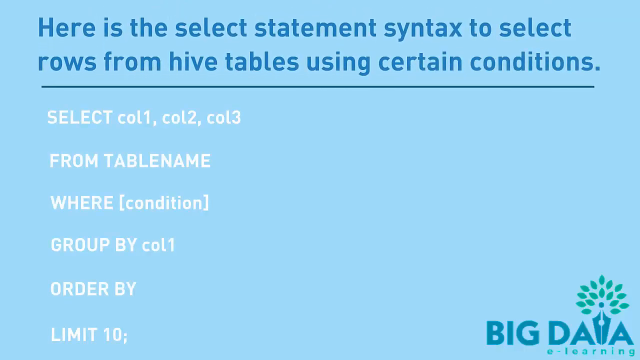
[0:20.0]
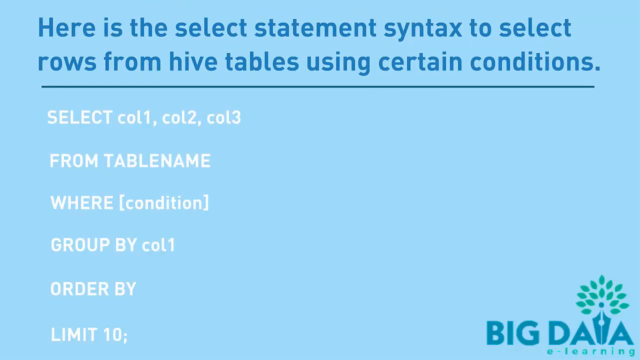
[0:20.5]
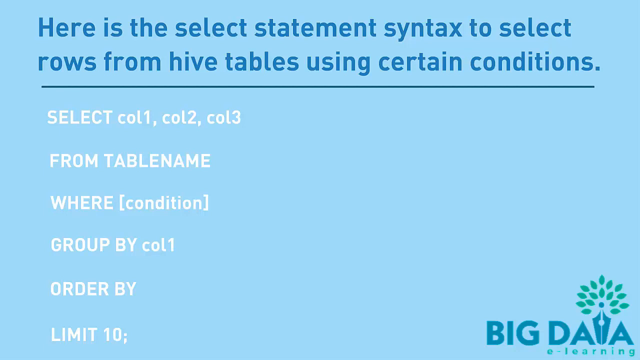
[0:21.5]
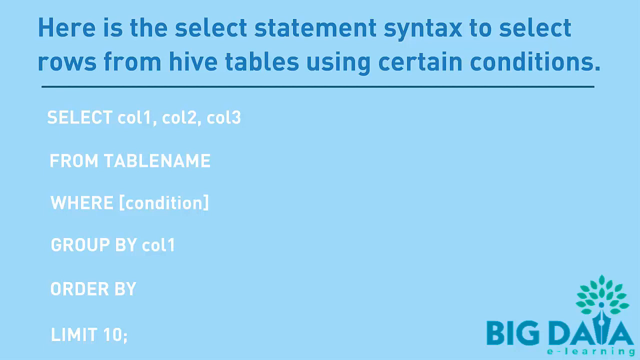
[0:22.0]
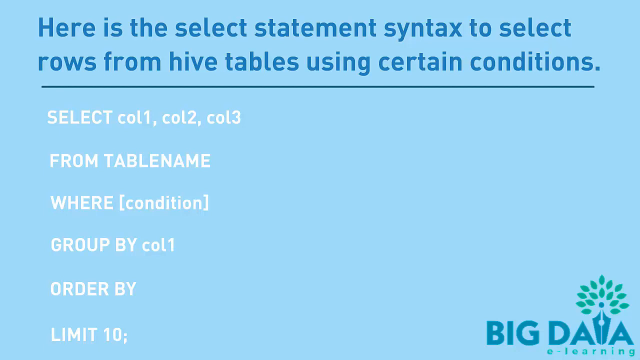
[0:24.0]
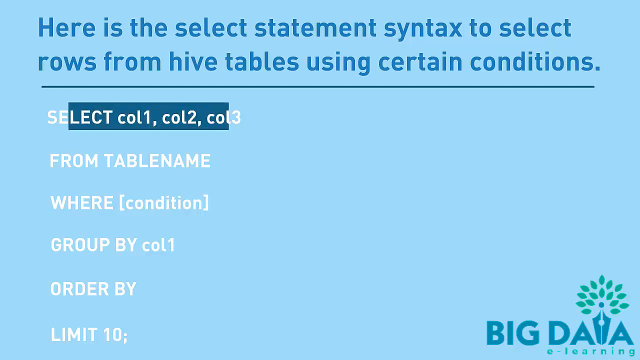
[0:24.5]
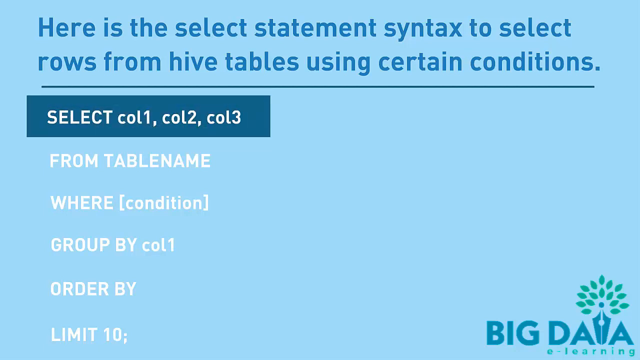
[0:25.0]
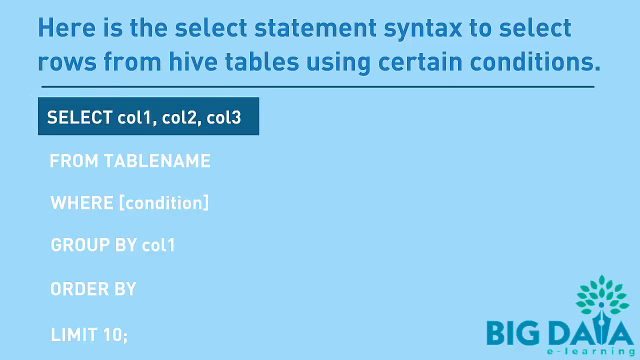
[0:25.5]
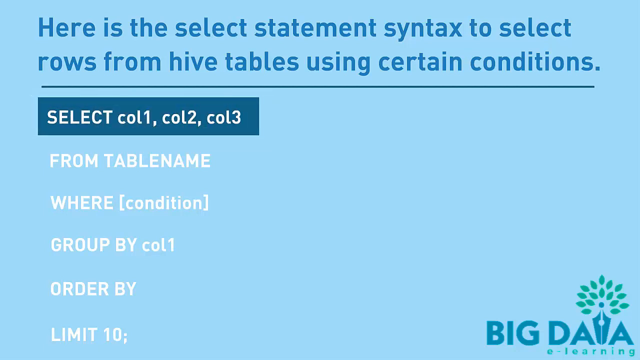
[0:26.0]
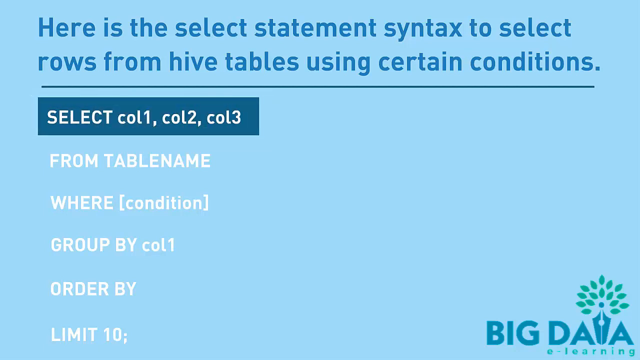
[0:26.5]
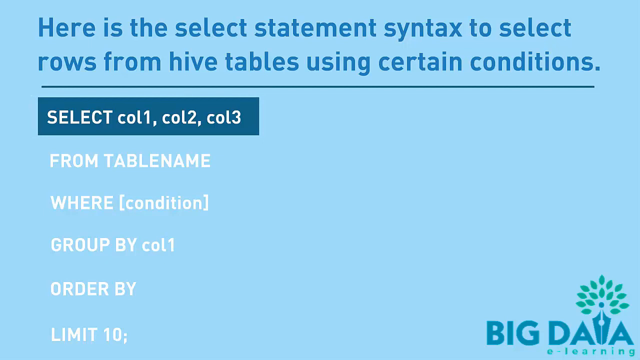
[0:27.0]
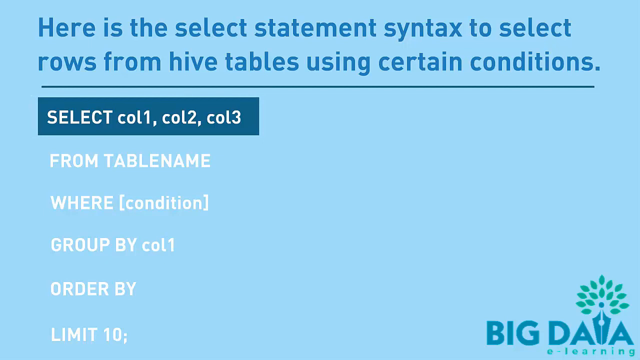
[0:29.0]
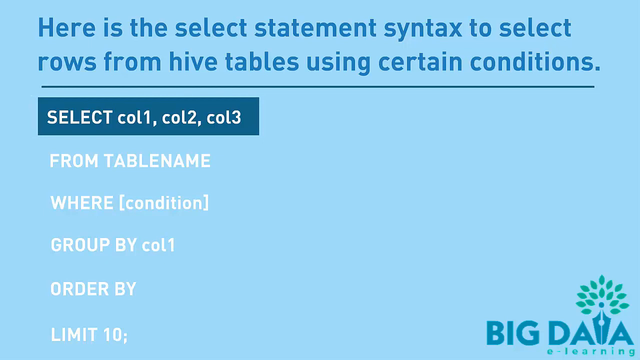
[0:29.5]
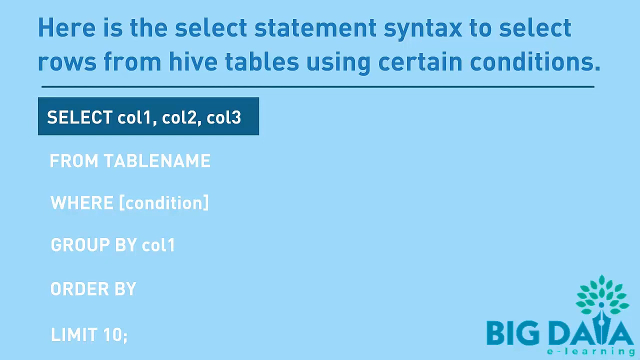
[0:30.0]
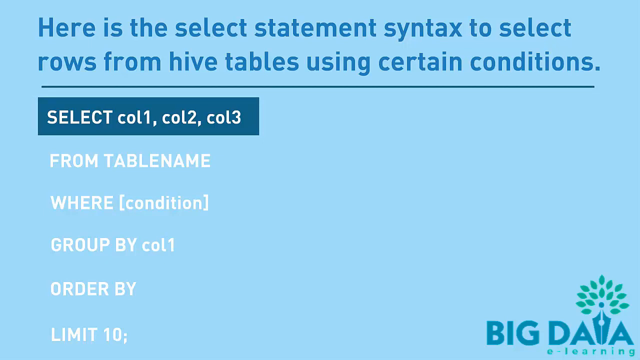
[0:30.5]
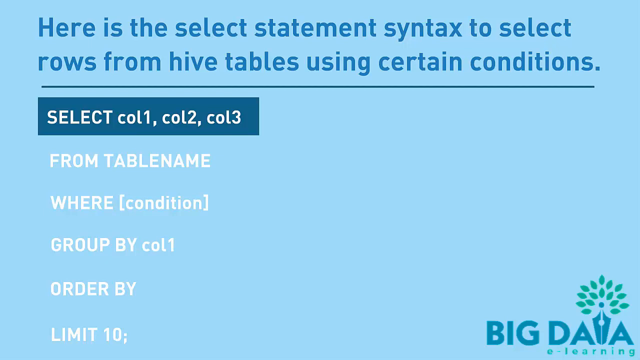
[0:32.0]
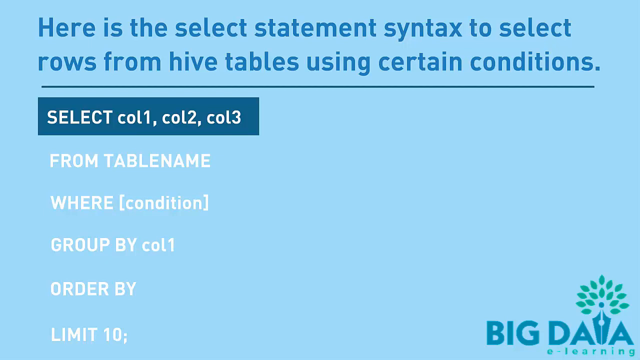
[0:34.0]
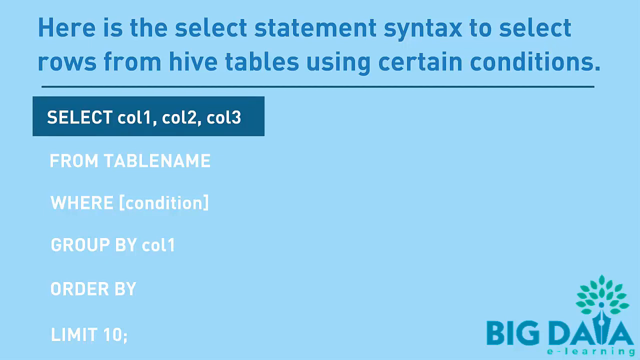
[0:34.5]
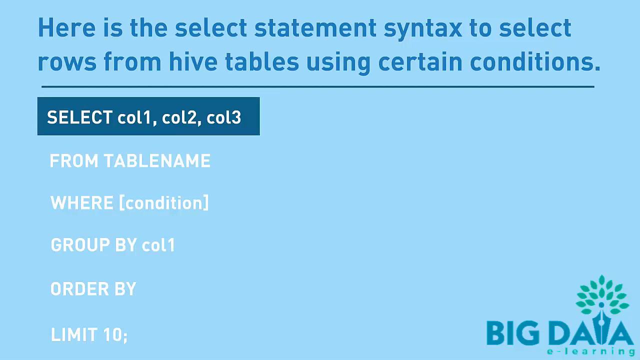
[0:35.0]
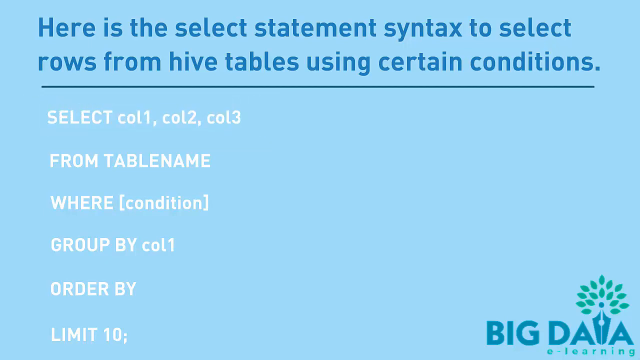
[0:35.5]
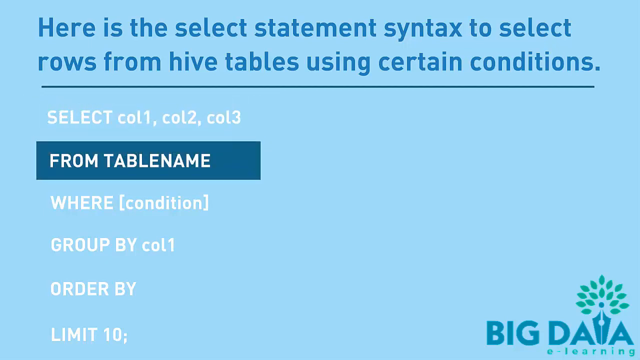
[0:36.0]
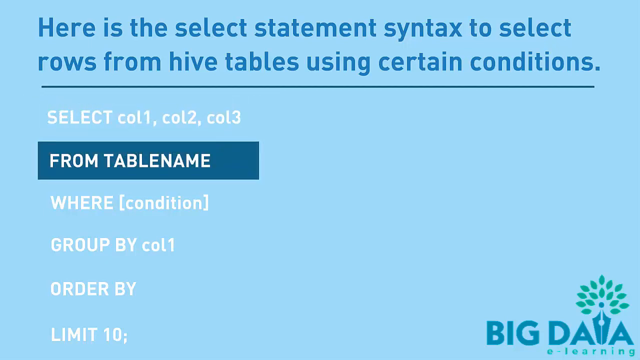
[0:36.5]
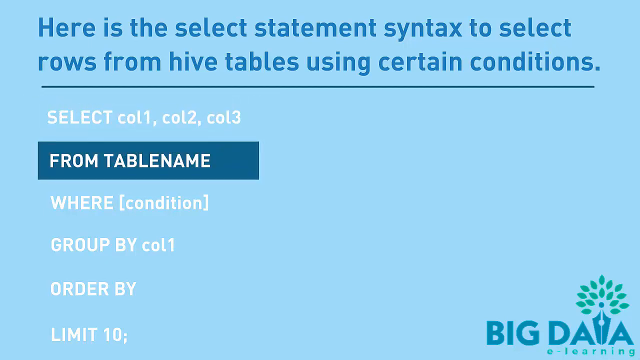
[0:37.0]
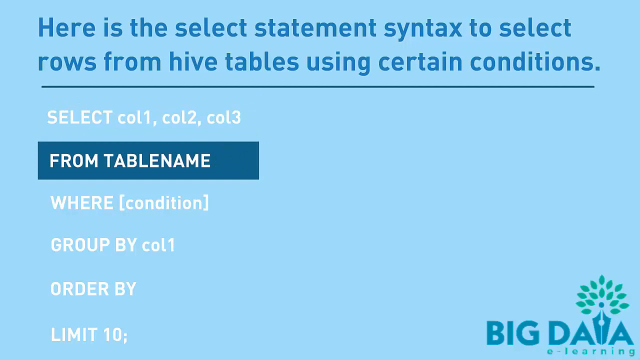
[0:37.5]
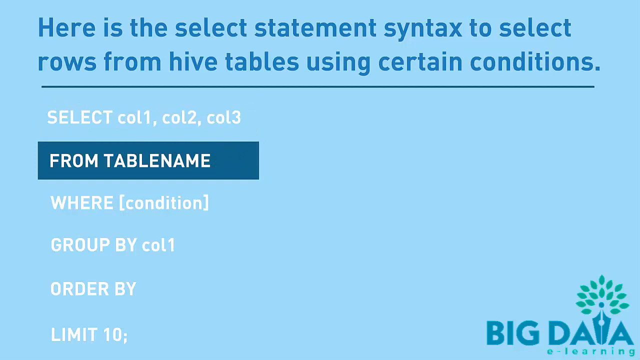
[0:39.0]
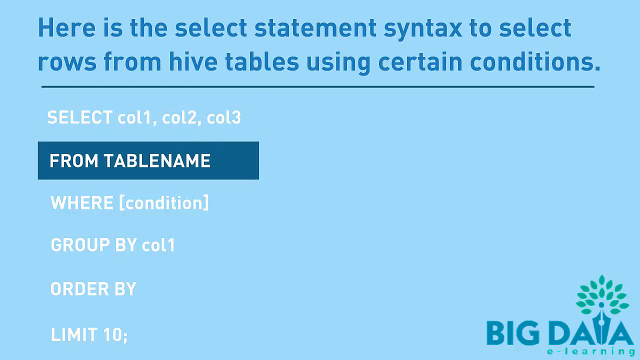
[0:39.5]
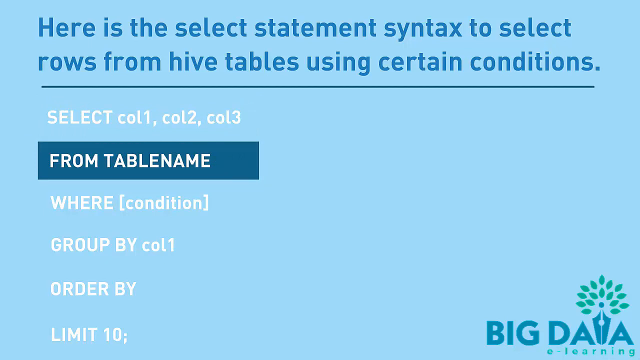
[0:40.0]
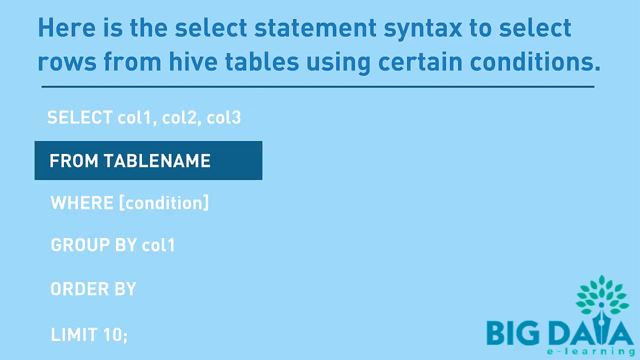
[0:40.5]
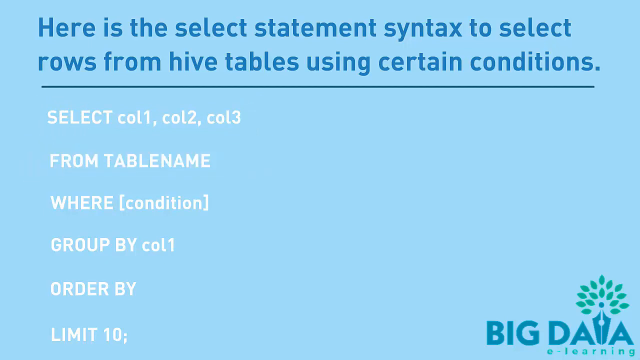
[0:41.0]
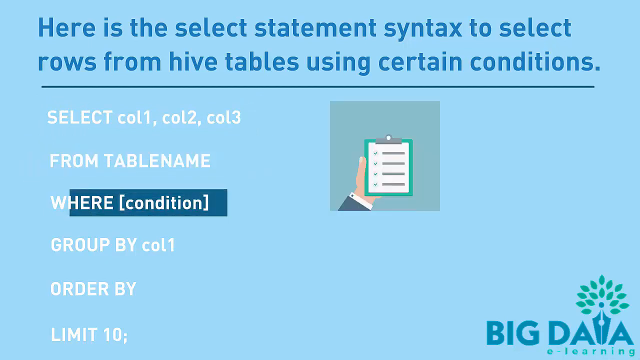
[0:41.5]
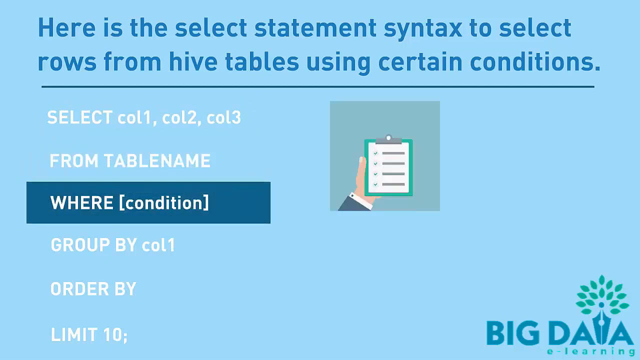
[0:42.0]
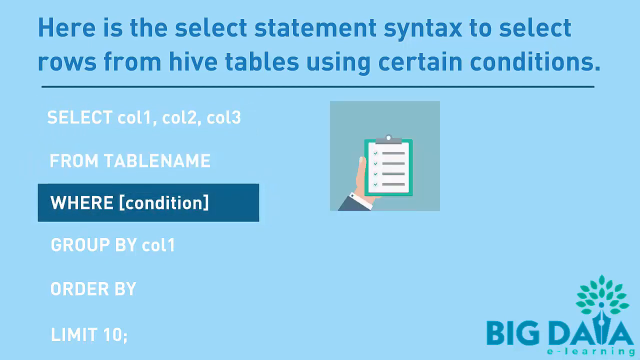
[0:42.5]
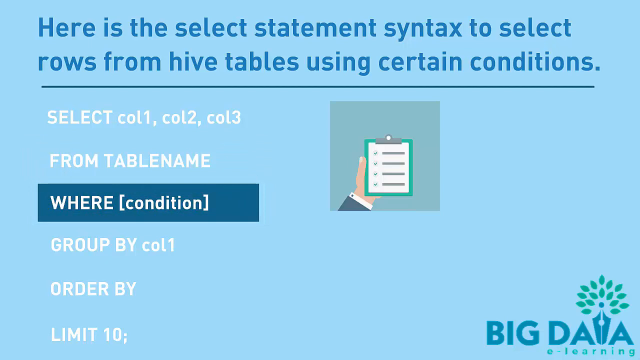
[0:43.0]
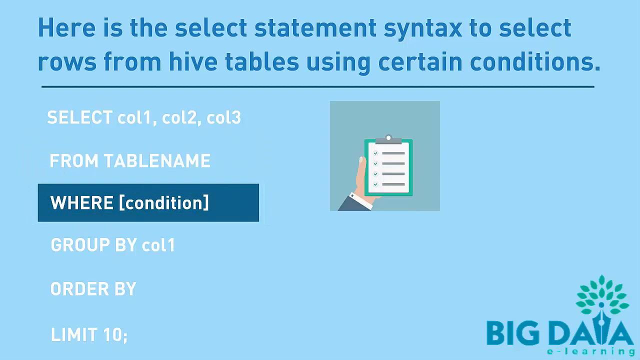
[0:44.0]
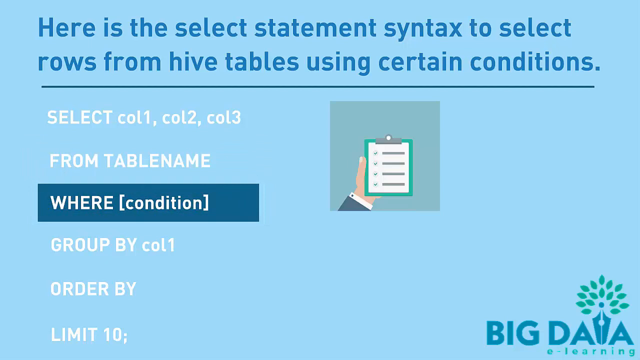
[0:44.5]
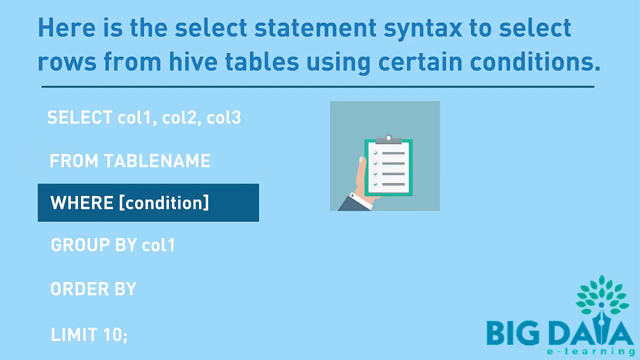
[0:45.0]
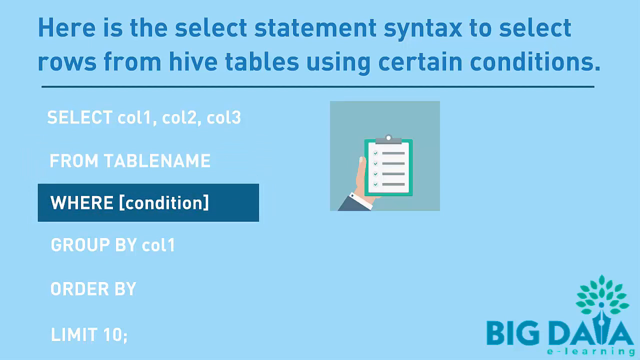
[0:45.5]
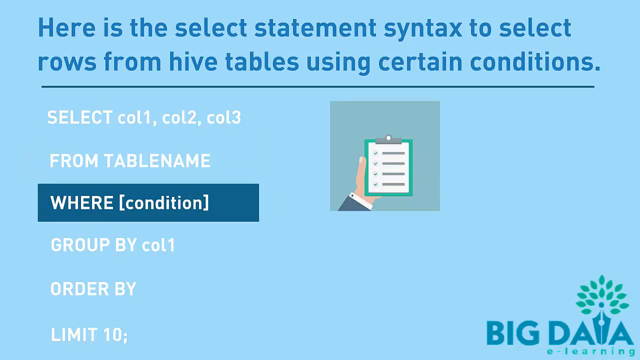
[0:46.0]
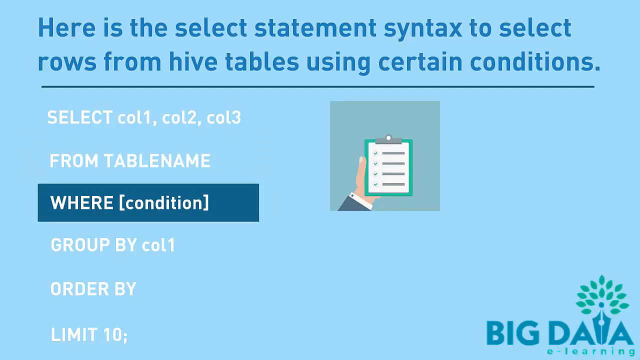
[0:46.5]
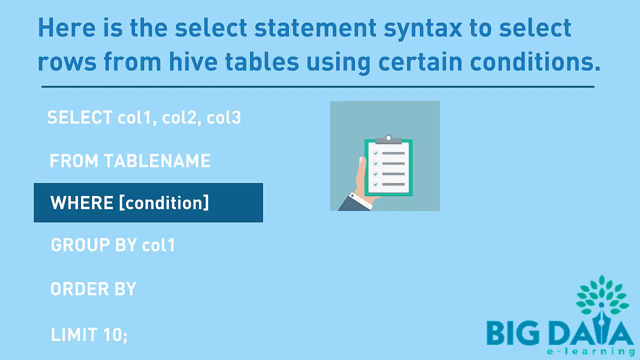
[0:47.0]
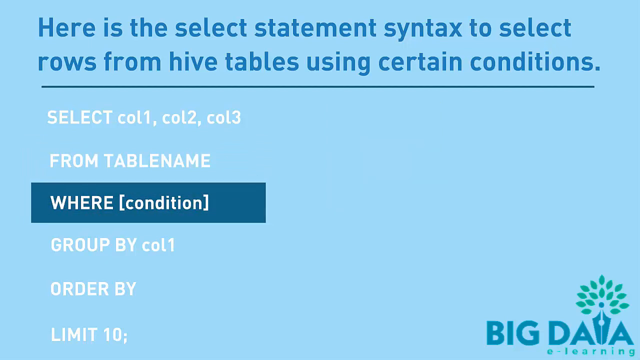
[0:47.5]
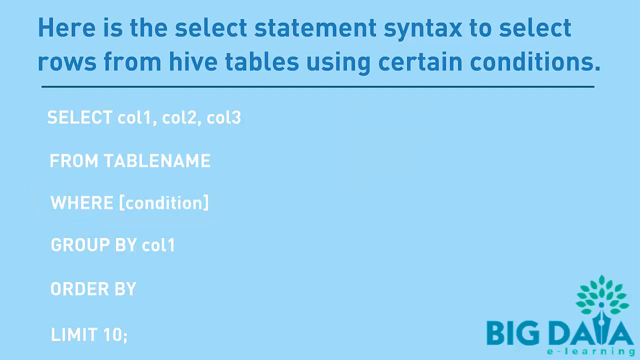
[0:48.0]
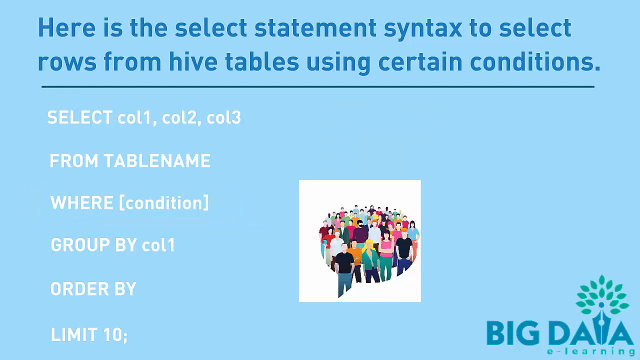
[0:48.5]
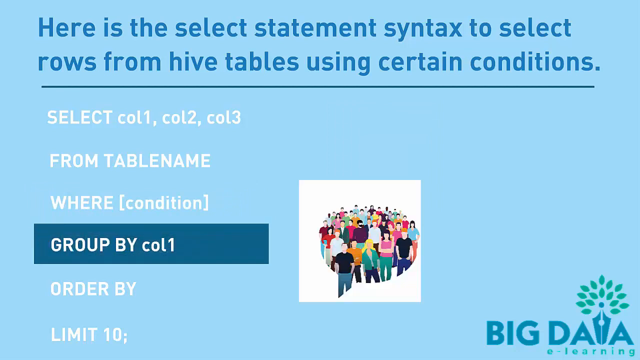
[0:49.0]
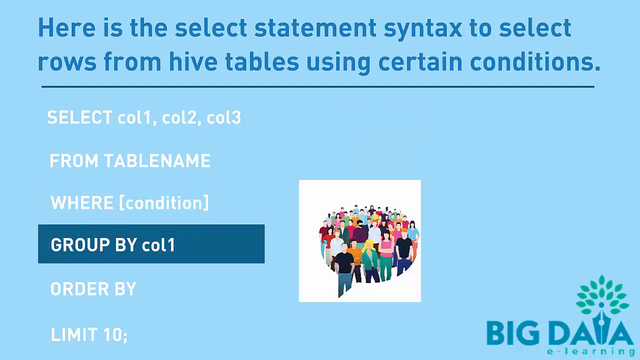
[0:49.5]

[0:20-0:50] A screen has text at the top reading "Here is the select statement syntax to select rows from hive tables using certain conditions." Below it are lines reading "SELECT col1, col2, col3", "FROM TABLENAME", "WHERE (condition)", "GROUP BY col1", "ORDER BY" and "LIMIT 10". The first item on the list is highlighted with a dark blue bar. The bar then disappears and the second item is highlighted with the same dark blue bar, then the third. As the third item is highlighted, a graphic appears on the right showing an illustration of someone's hand holding a clipboard. Then the GROUP BY col1 line is highlighted, and another illustrated graphic appears on the right showing a large group of people assembled inside a circle. It is very colorful, but the people are faceless; the illustration is very simplistic and streamlined.